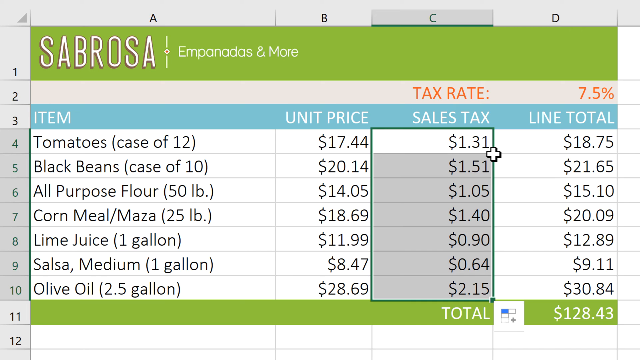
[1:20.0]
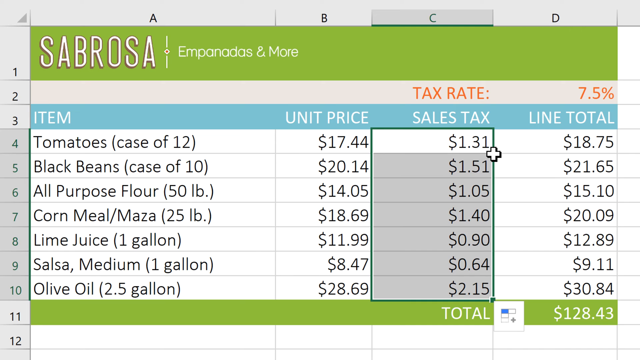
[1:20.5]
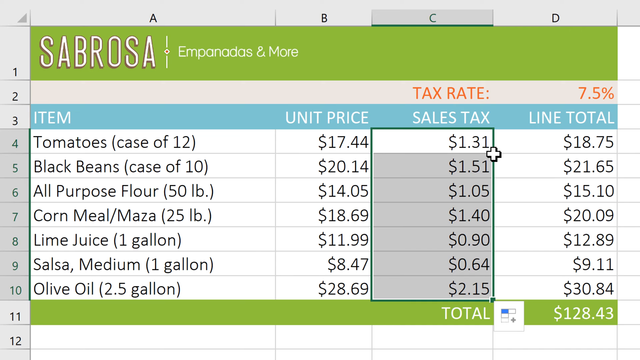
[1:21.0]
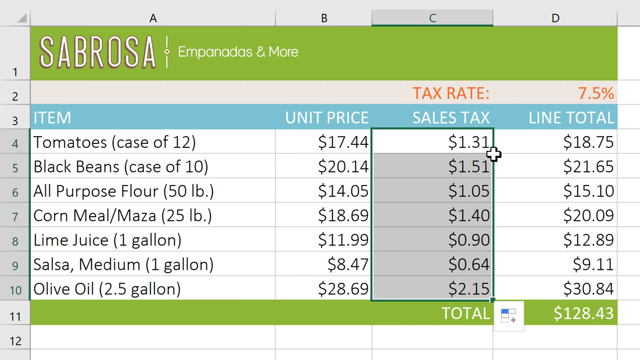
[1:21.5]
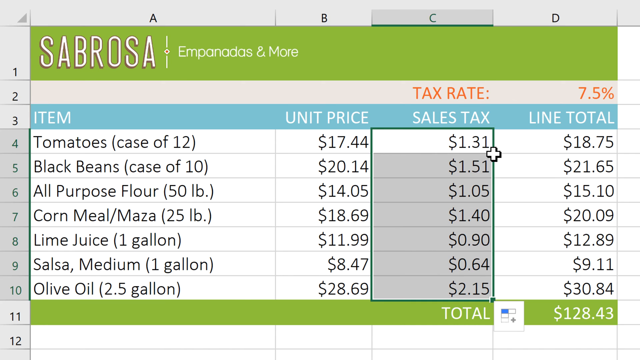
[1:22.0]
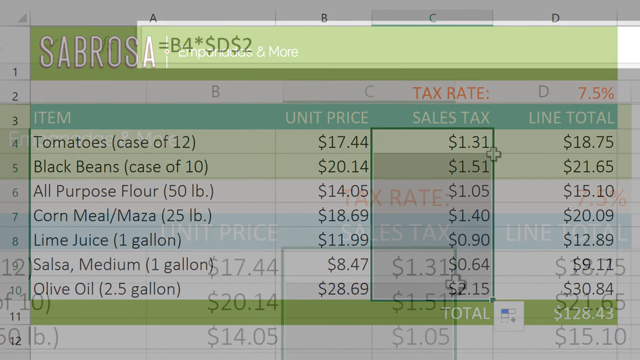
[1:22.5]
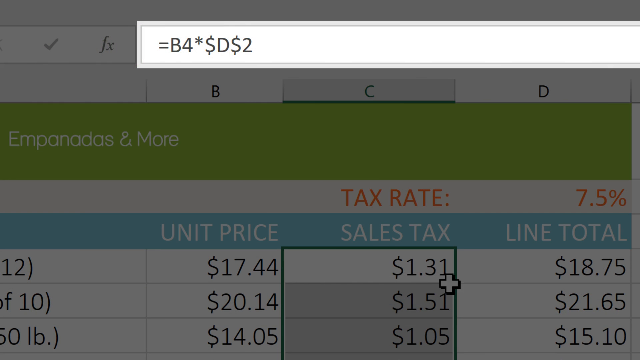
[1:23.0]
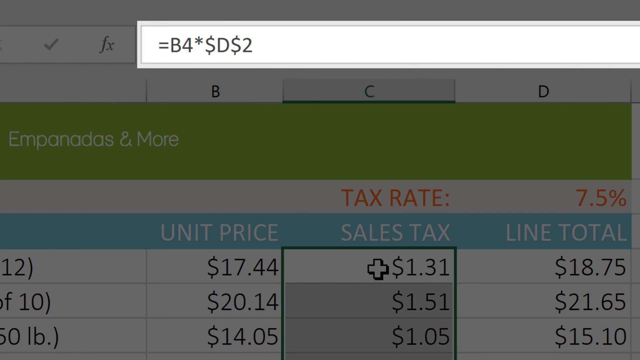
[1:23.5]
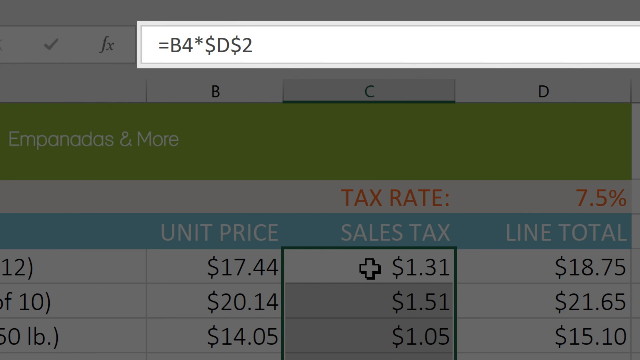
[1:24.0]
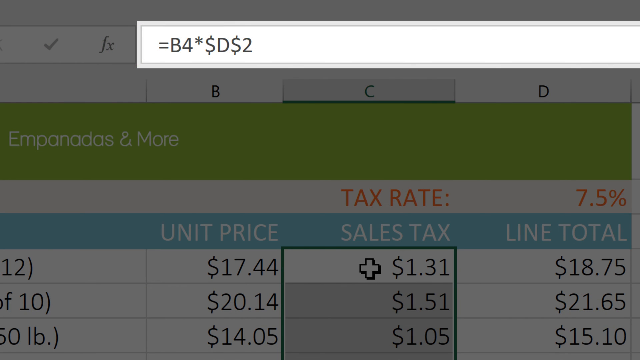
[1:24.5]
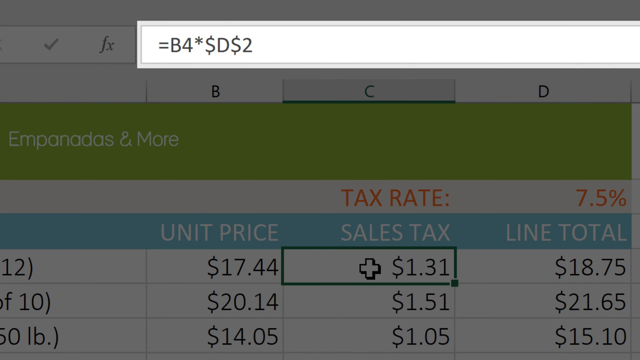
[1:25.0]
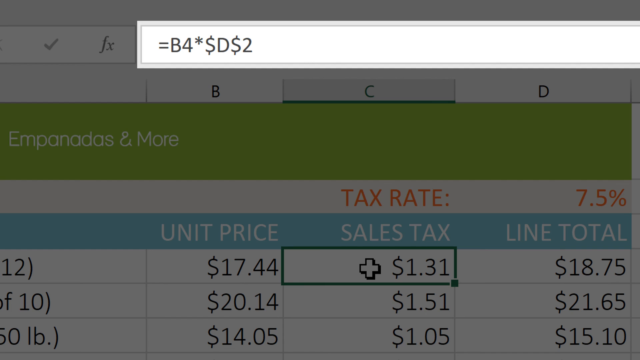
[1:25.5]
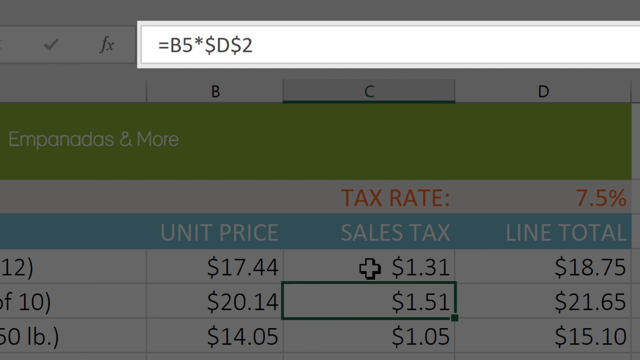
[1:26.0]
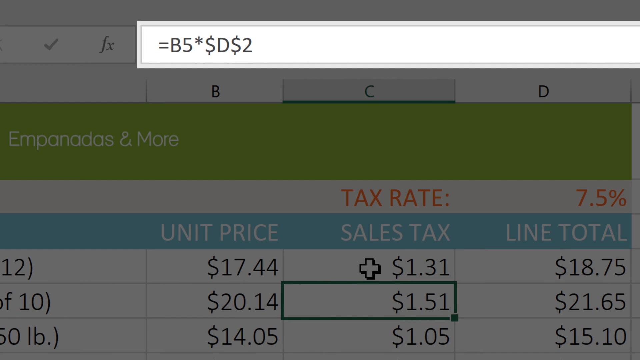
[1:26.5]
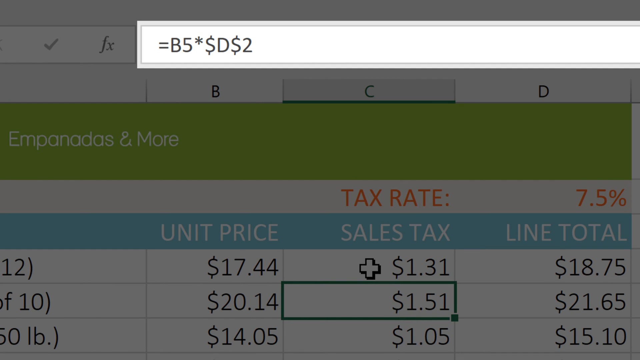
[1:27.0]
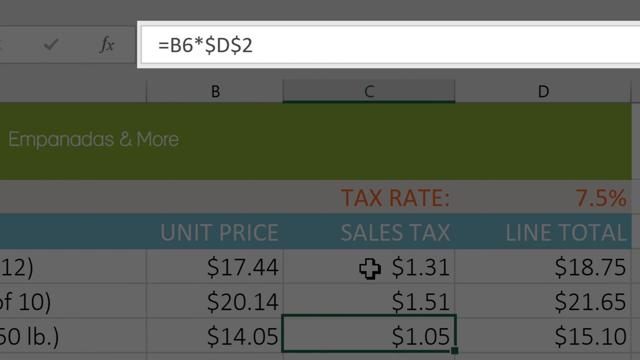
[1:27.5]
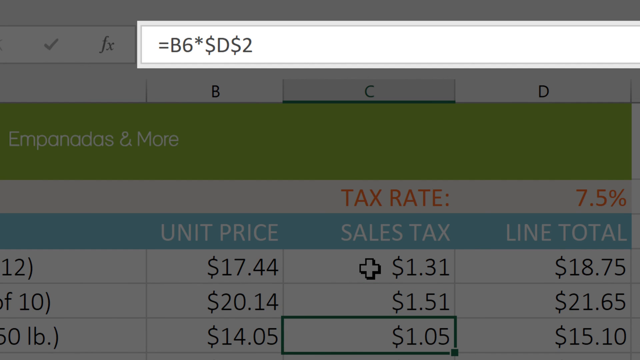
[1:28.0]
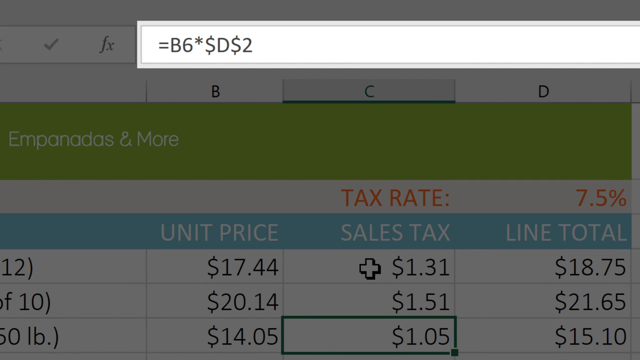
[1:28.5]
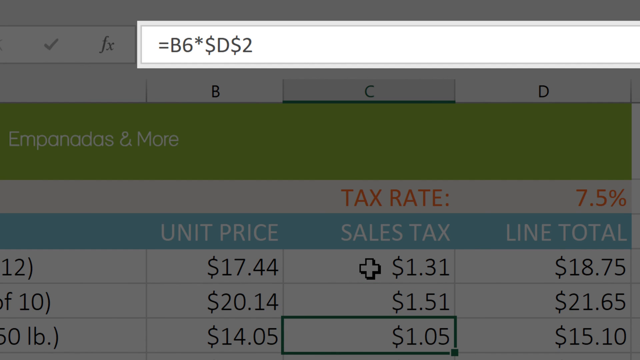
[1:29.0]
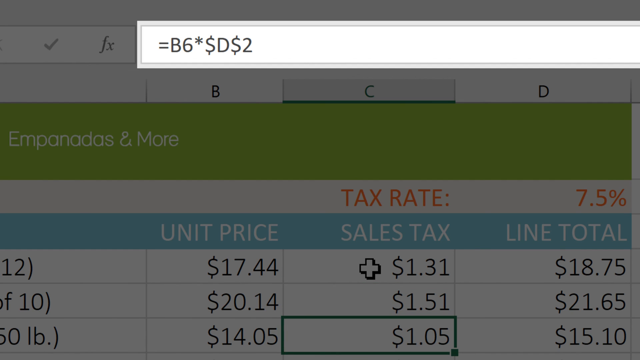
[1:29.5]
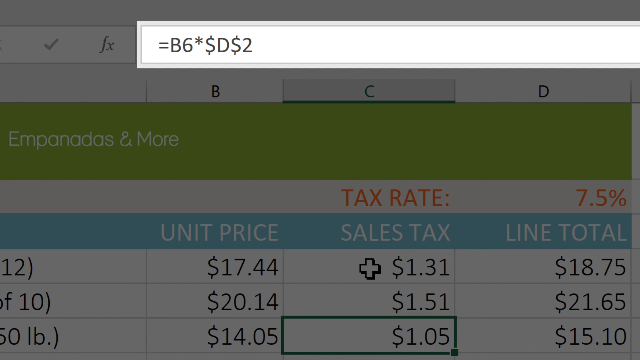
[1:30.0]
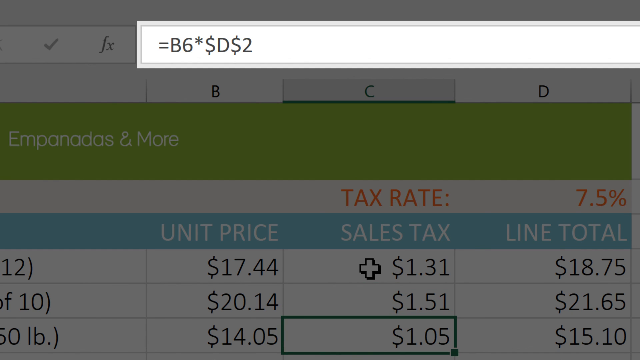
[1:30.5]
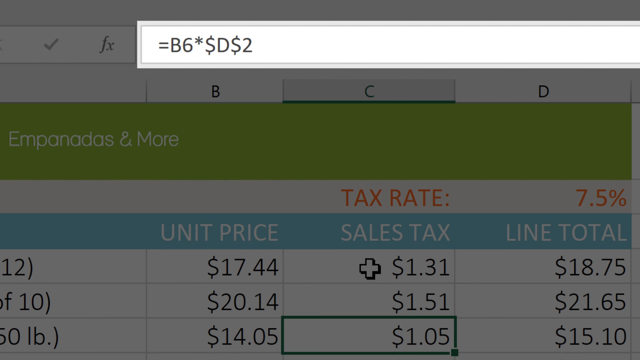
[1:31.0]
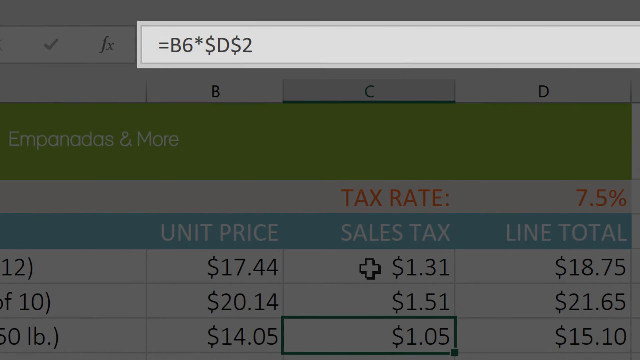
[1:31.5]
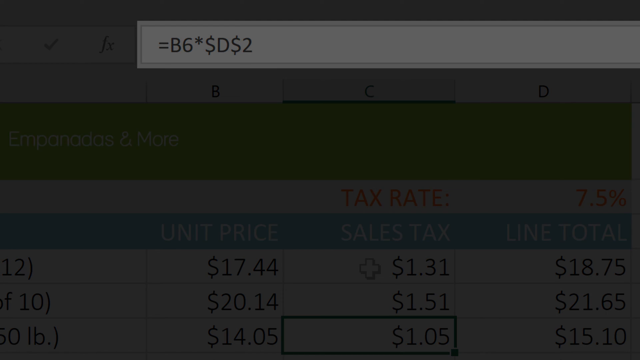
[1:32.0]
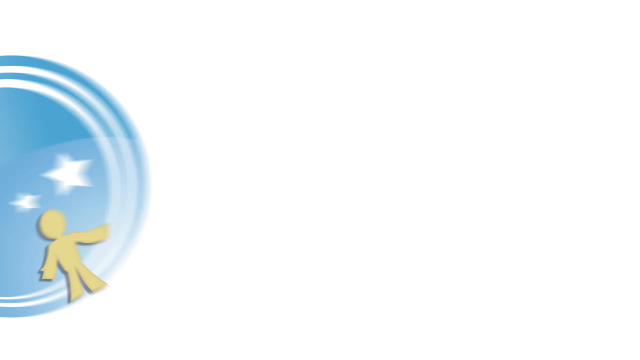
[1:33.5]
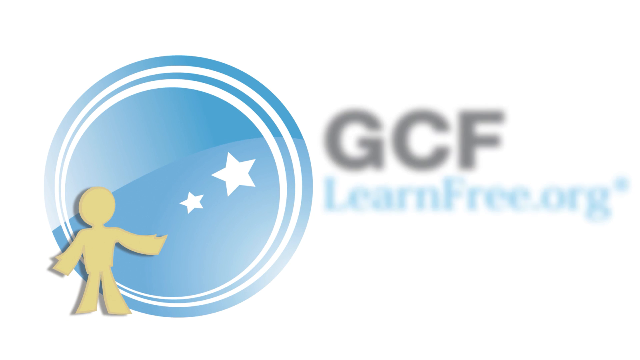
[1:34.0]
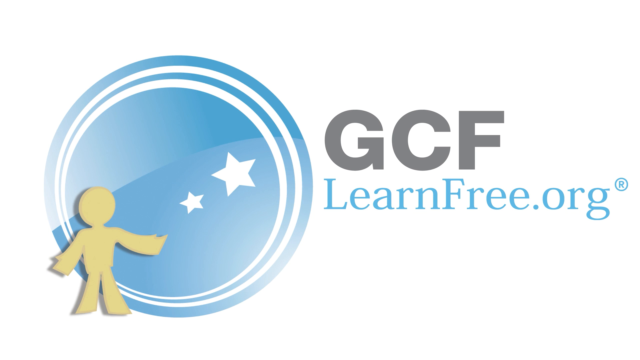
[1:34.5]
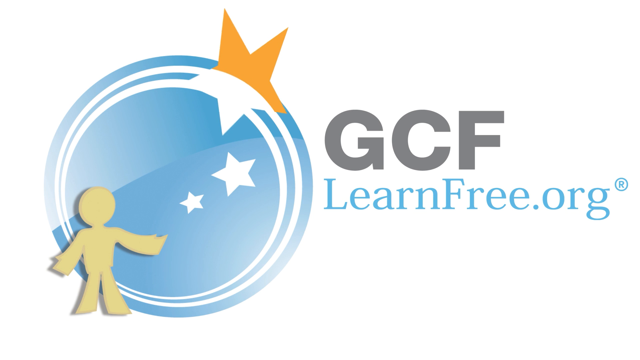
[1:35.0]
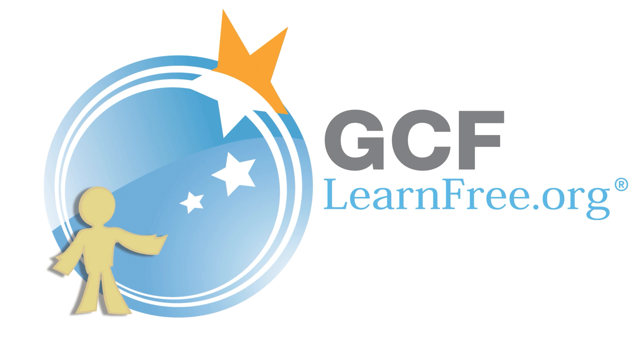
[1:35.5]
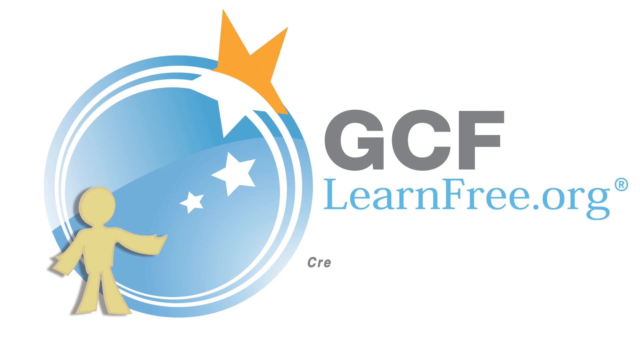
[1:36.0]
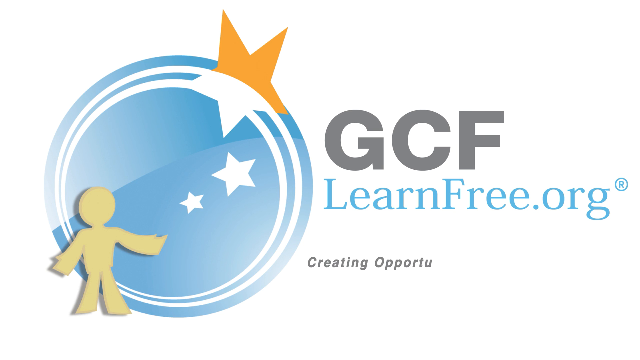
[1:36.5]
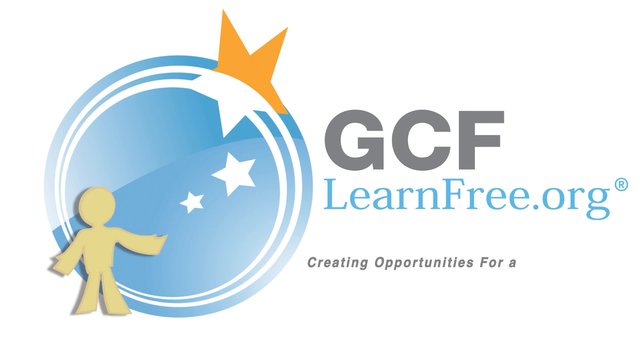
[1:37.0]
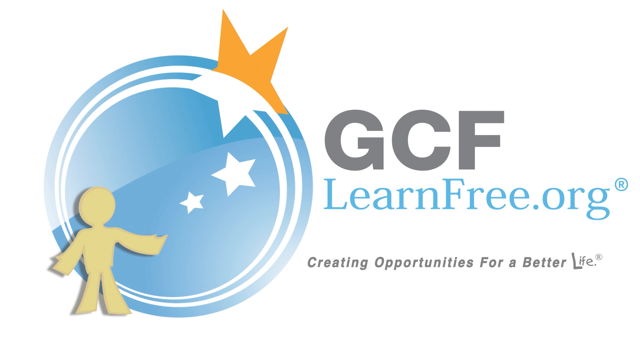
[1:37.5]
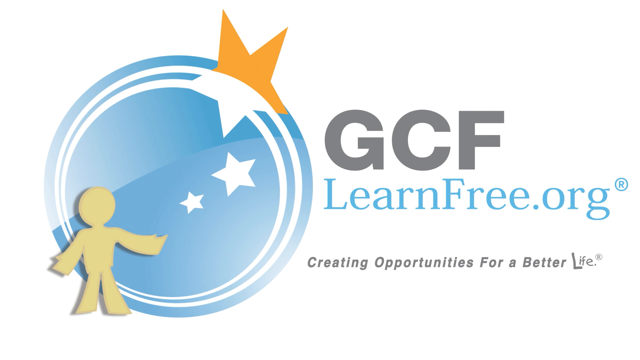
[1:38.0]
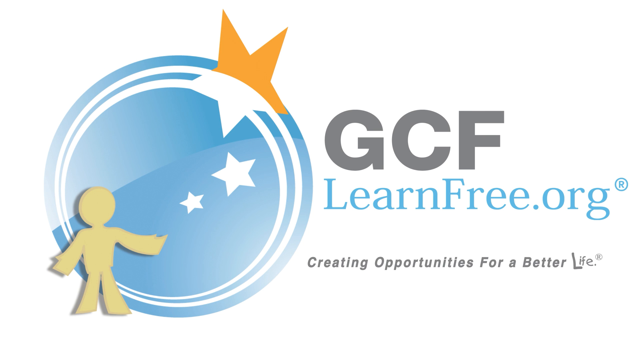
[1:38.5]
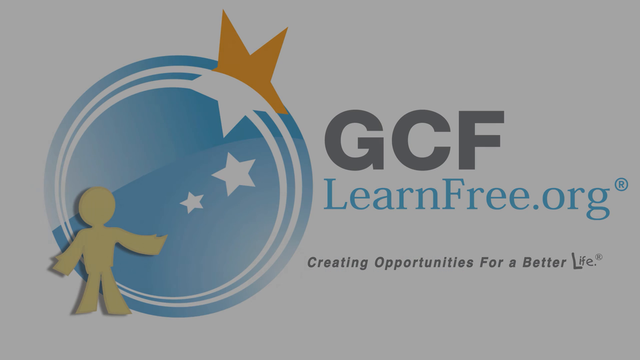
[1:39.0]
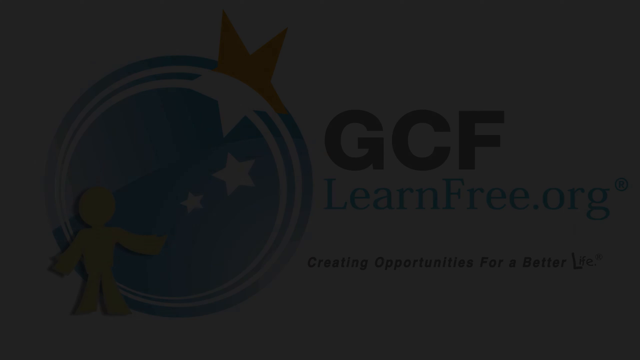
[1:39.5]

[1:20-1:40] The Excel page of Sabrosa Empanadas and more shows money paid for some items, with the list of items, units, prices, sales tax and line total. At the top, the tax rate of 7.5 percent is written in red. The cursor stops on the sales tax and moves from the first digit to the second and then the third. Next, "gclearnfree.org creating opportunities for a better life" appears along with a logo of a human figure, a cartoon character in a blue circle with stars. Then the Sabrosa Empanadas and more sheet is shown with its listed items and unit prices: tomatoes, case of 12, $17.44; black beans, case of 10, $20.14; all-purpose flour, $14.05; cornmeal or maza, $18.69; lime juice, one gallon, $11.99; salsa medium, one gallon, $8.47; and olive oil, 2.5 gallon, $28.69. The total is 128.43.